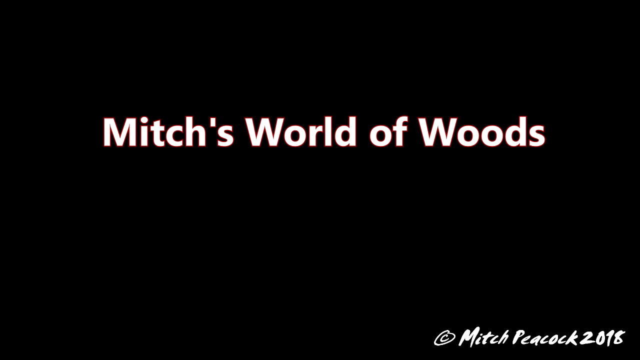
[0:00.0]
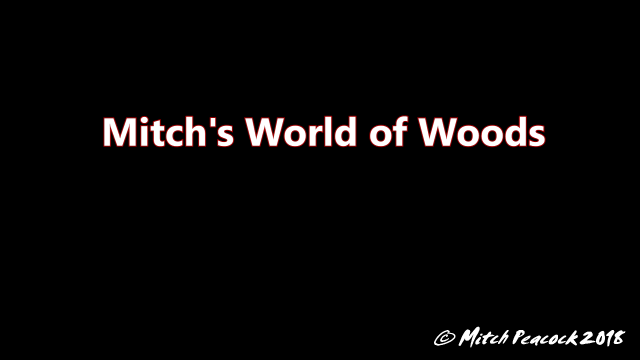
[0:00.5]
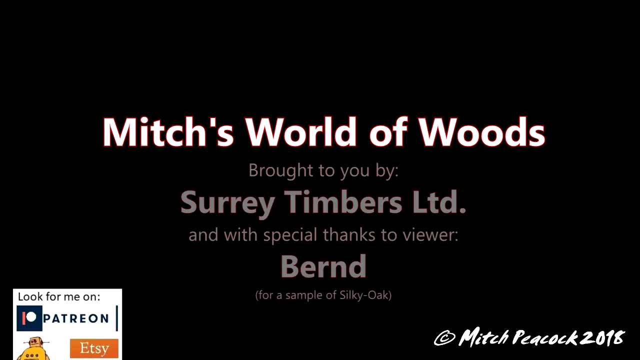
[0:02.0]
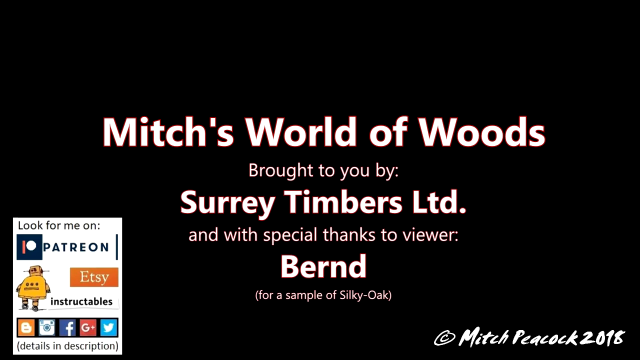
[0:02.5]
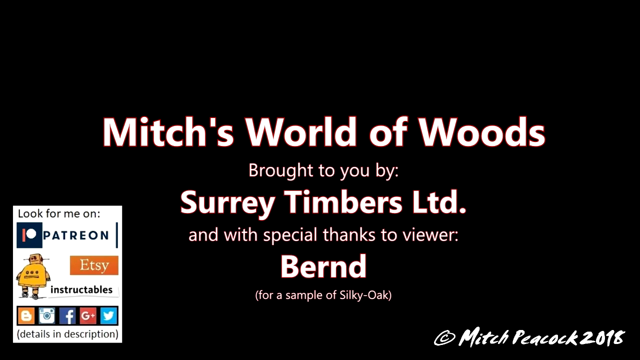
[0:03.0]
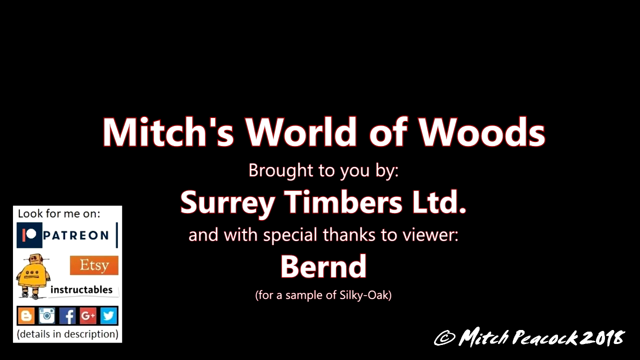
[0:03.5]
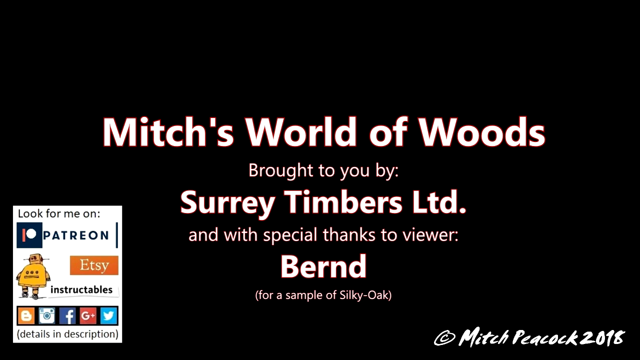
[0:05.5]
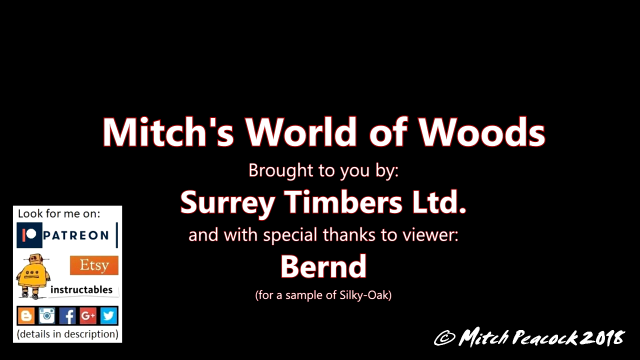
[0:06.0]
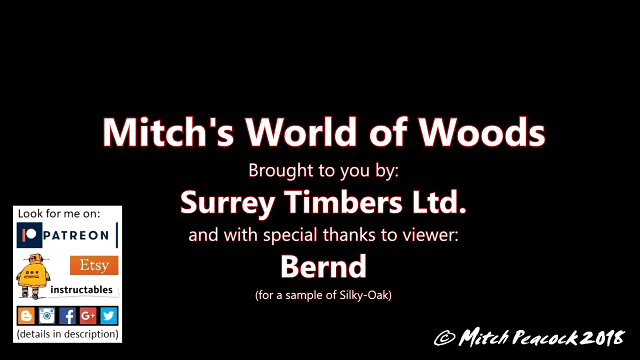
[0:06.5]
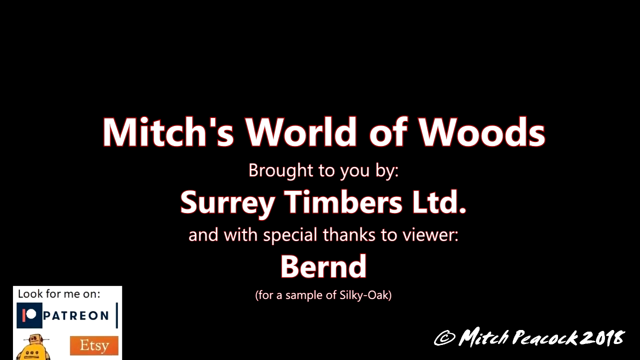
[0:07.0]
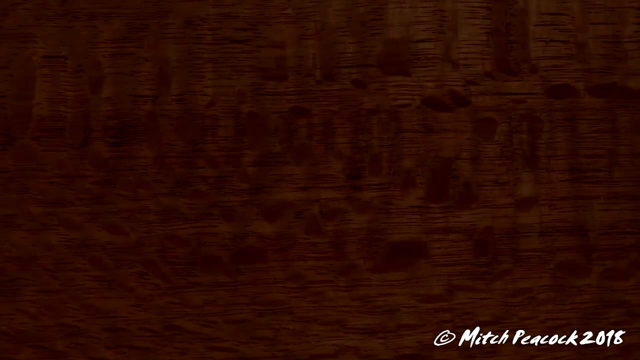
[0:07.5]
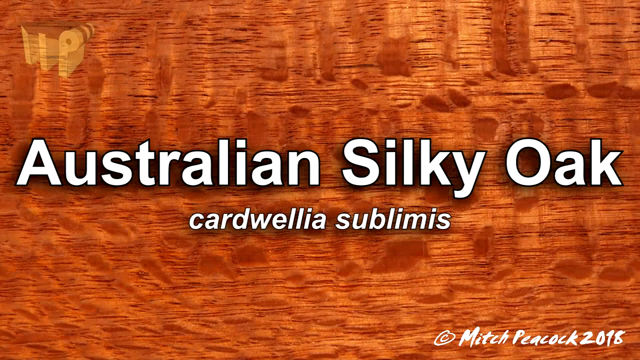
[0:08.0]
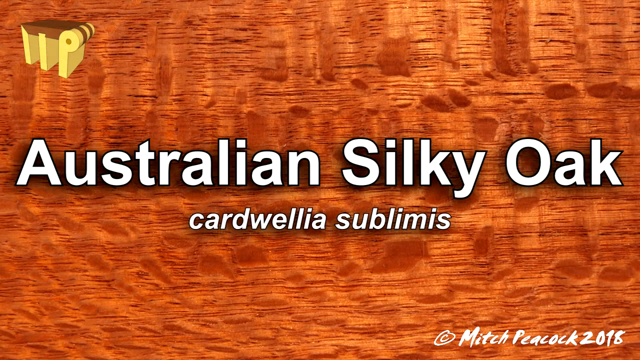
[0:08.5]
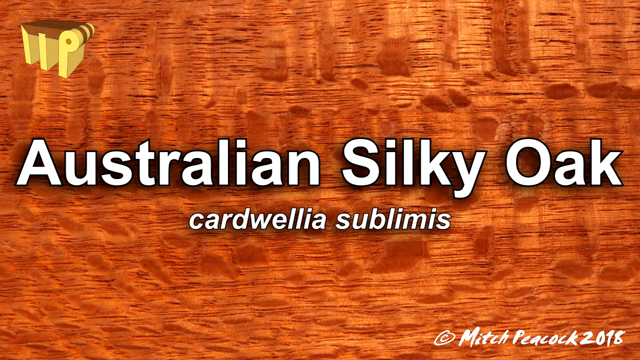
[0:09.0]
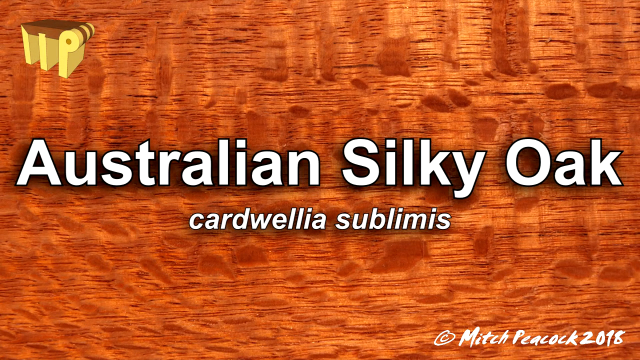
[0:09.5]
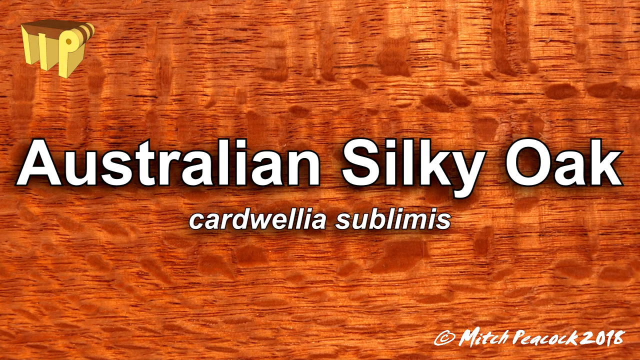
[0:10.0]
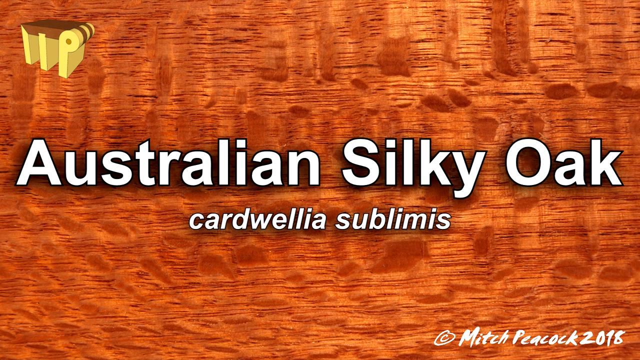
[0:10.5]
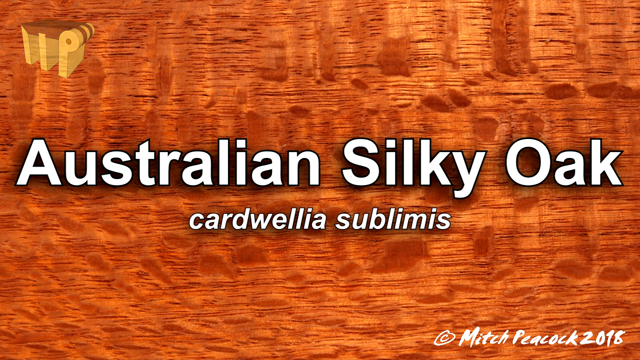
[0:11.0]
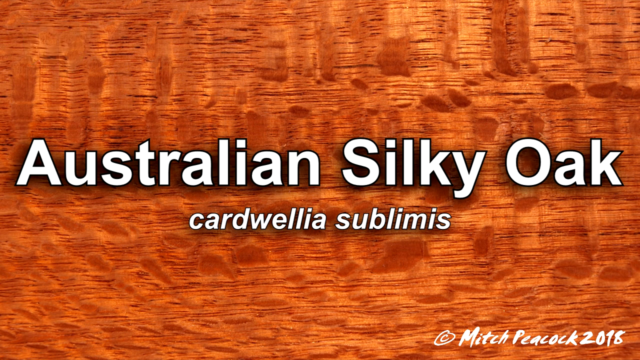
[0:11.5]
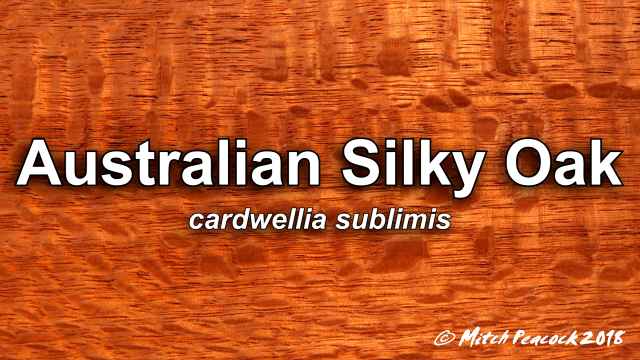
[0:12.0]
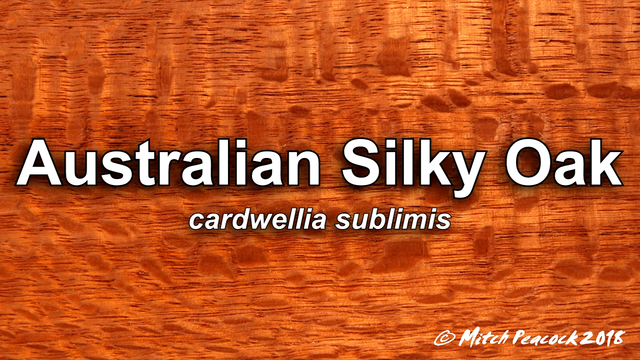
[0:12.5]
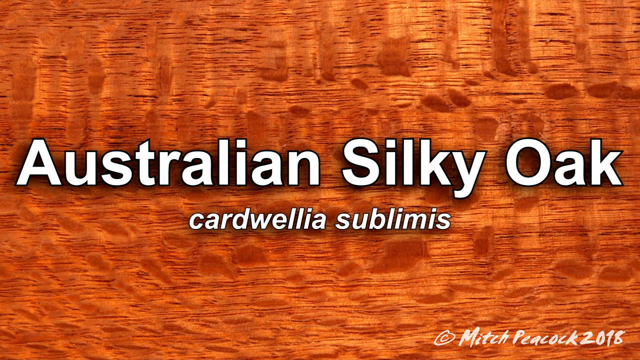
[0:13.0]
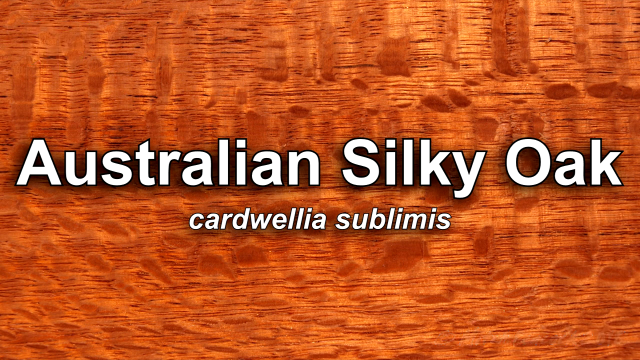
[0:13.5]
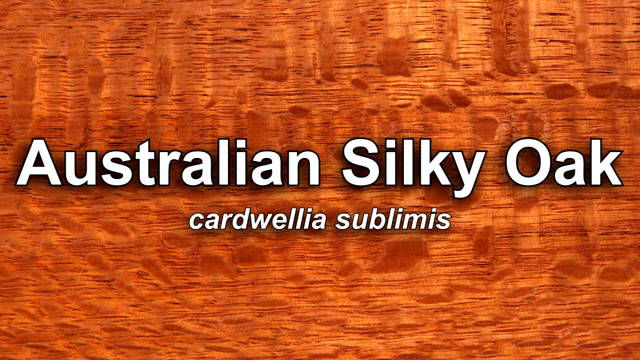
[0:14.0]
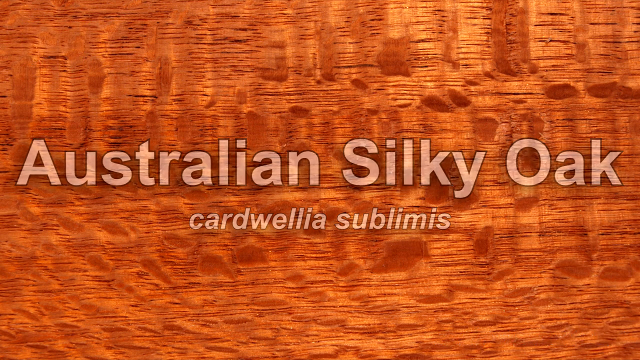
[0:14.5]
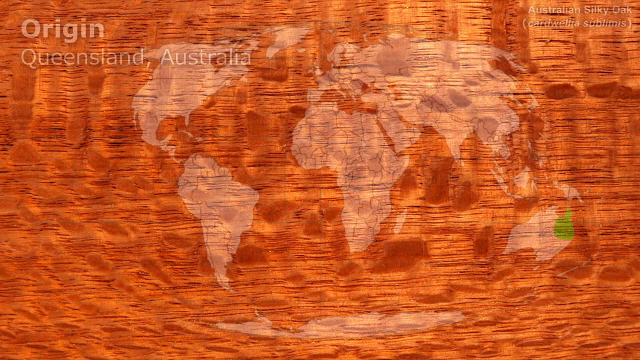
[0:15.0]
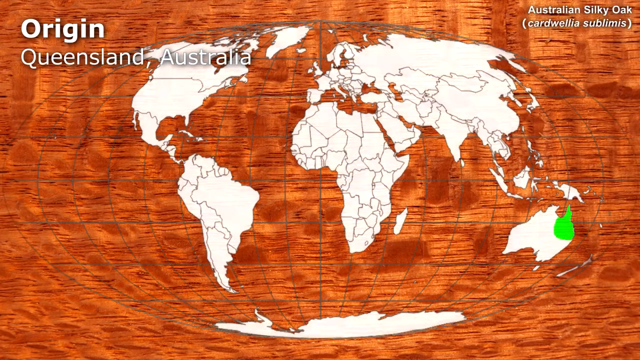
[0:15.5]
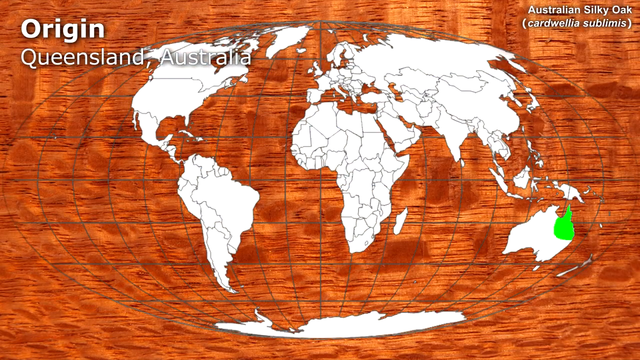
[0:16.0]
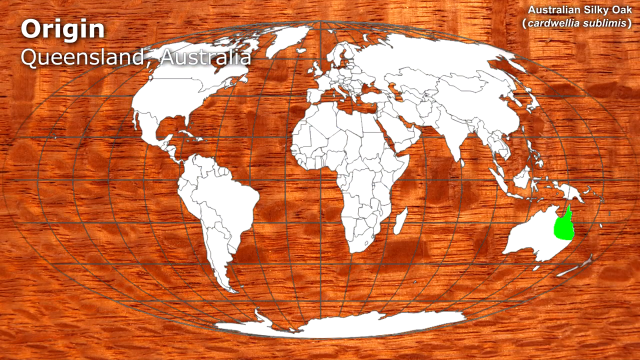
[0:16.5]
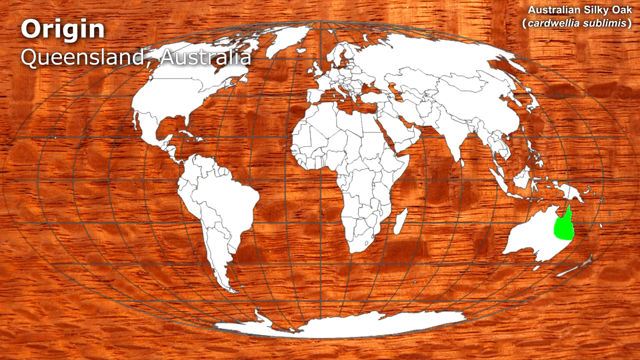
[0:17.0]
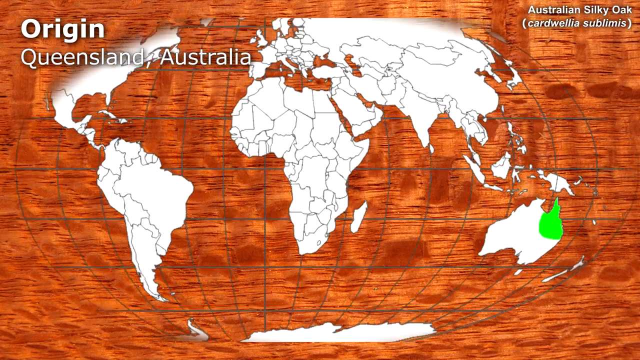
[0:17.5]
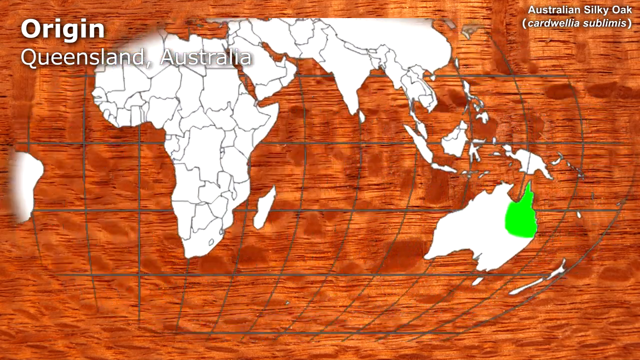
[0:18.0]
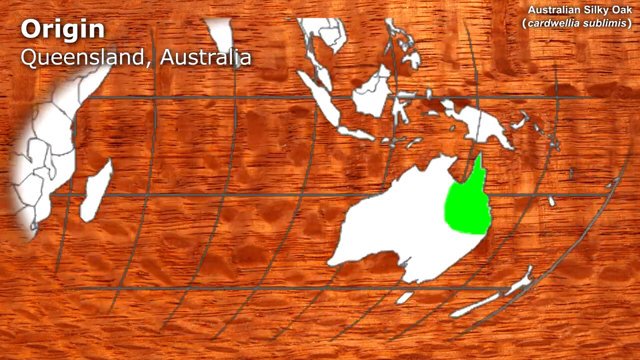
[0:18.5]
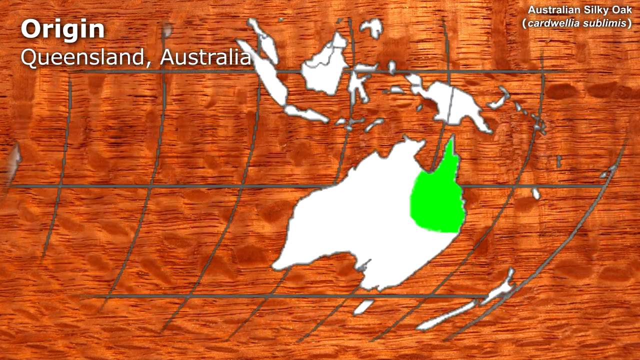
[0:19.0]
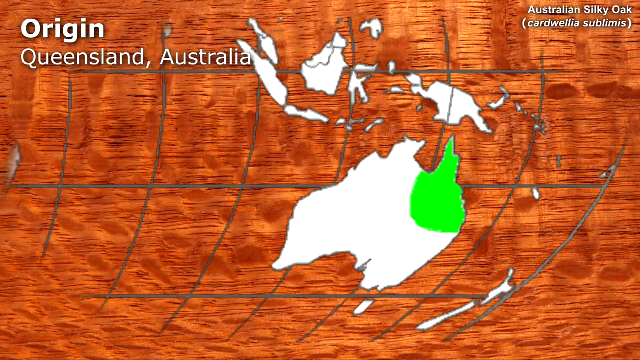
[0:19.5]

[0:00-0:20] The video opens on a black screen with "Mitch's World of Woods" in the middle in white font with a slight thin red outline. In the bottom right corner there is a copyright symbol and "Mitch Peacock 2018". More text then pops up in the middle of the screen: "Brought to you by Surrey Timbers Ltd" and "with special thanks to viewer, Bernd (for a sample of silky oak)". On the left side, a small white rectangular pop-up lists places to find the creator, reading "look for me on Patreon, Etsy, Instructables", along with a few other social media icons. Another screen follows with what looks like a wood-brown background, showing "Australian Silky Oak" in large white letters and "Cardwellia Sublimis" in smaller white letters underneath. The letters disappear and a world map appears: the areas where water would be are just the brown wooden background, the land is white, and a section of Australia on the right is highlighted in green. In the top left corner it reads "origin Queensland Australia", and in the upper right corner "Australian silky oak cardwellia sublimis". The view then zooms in to Australia on the map.